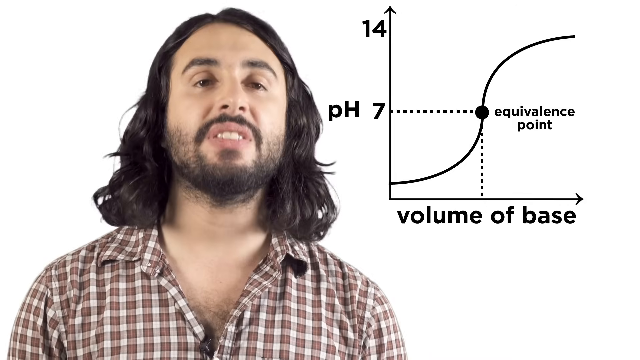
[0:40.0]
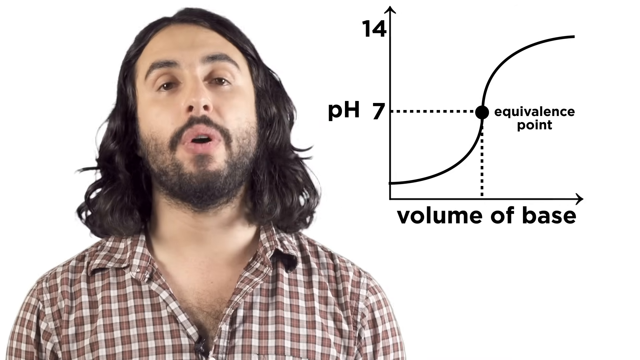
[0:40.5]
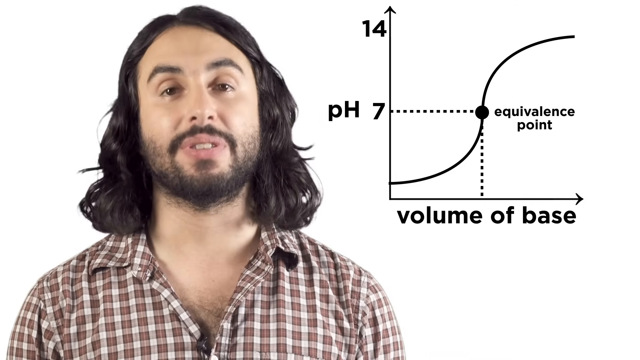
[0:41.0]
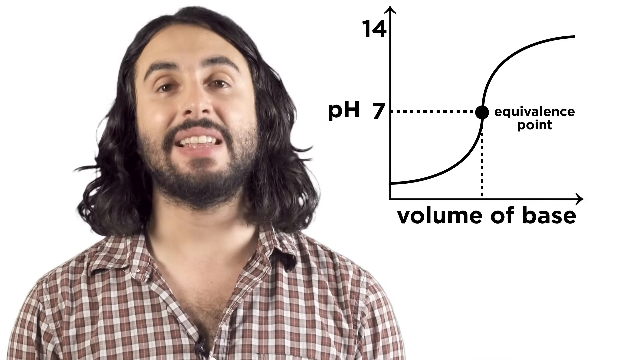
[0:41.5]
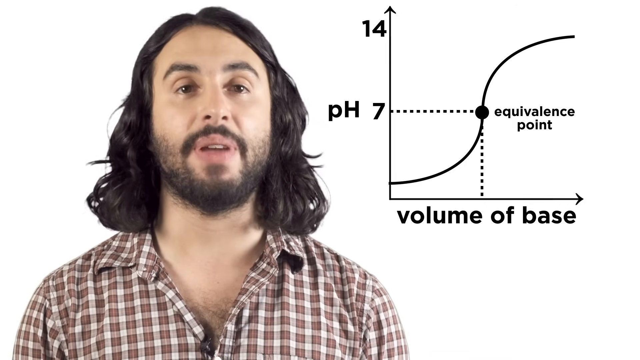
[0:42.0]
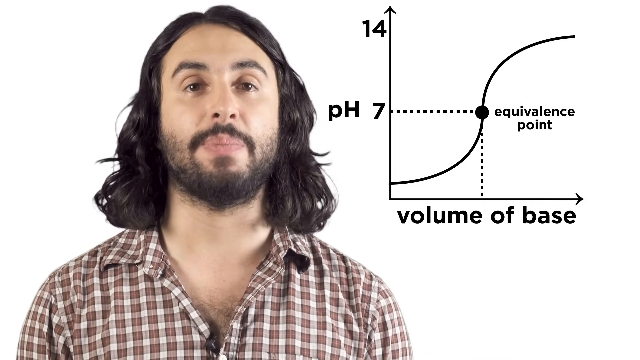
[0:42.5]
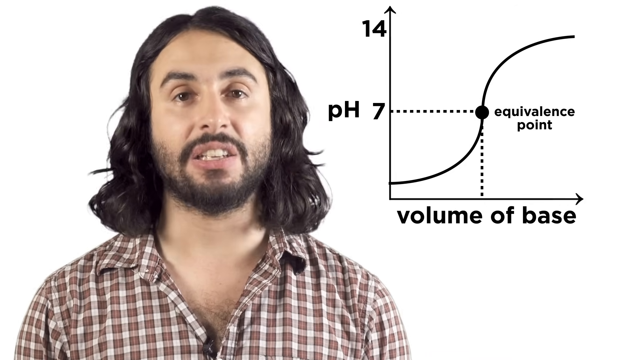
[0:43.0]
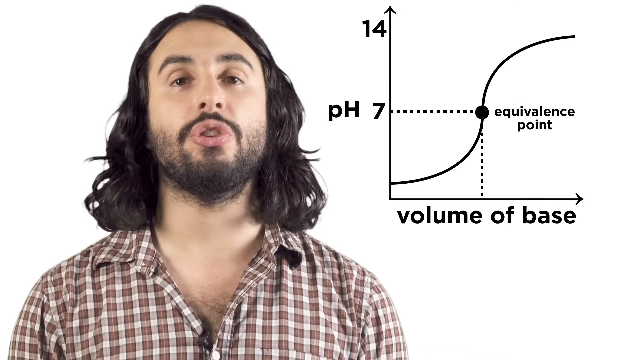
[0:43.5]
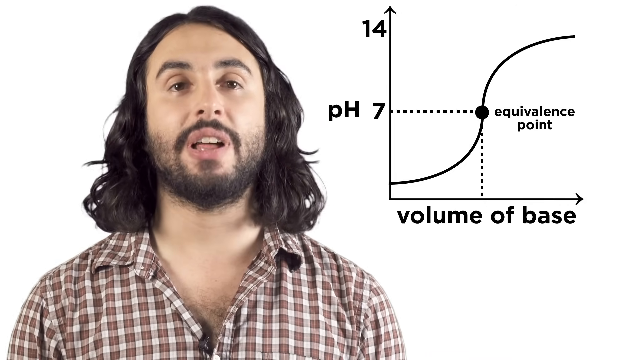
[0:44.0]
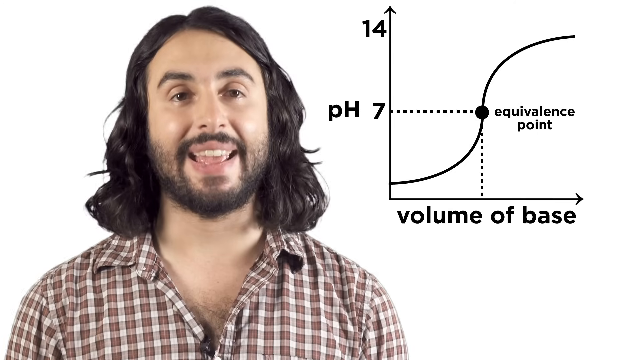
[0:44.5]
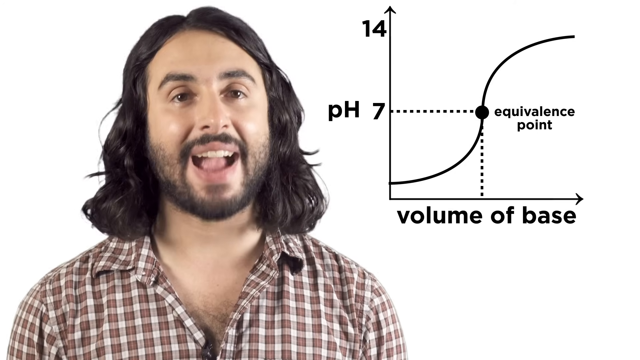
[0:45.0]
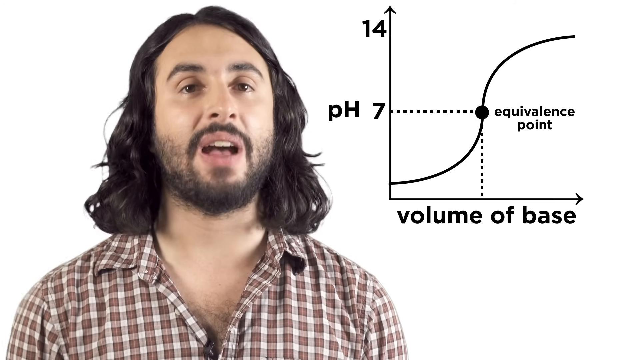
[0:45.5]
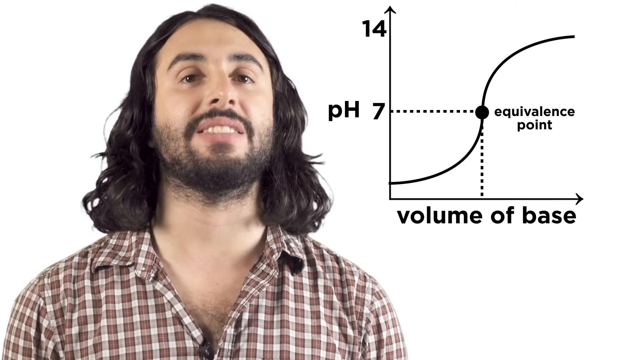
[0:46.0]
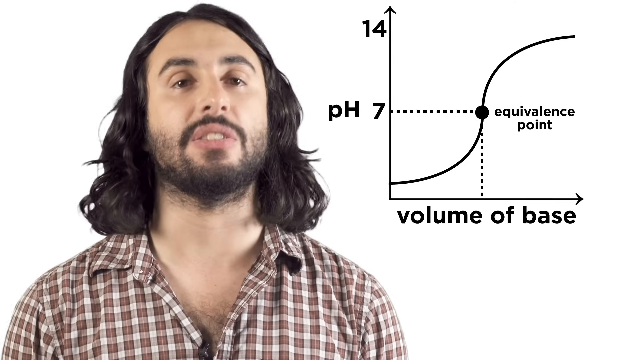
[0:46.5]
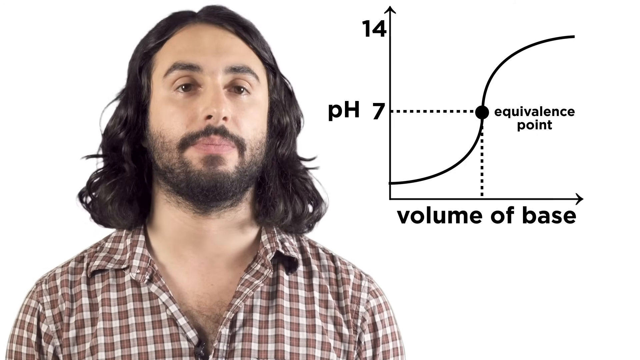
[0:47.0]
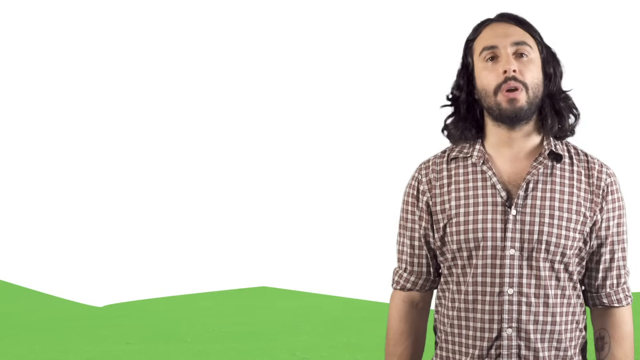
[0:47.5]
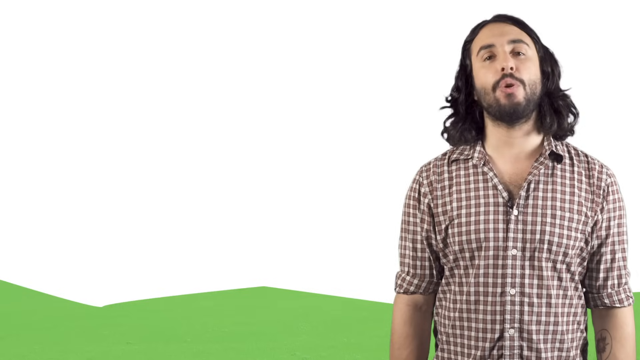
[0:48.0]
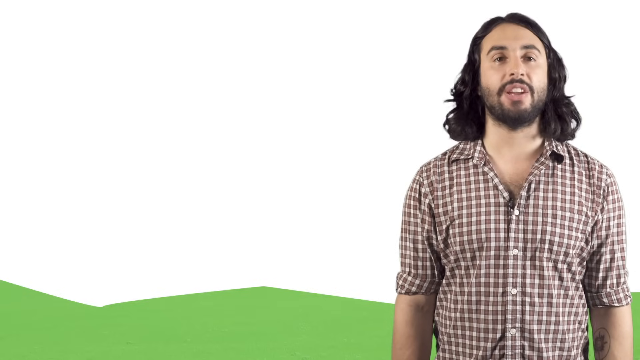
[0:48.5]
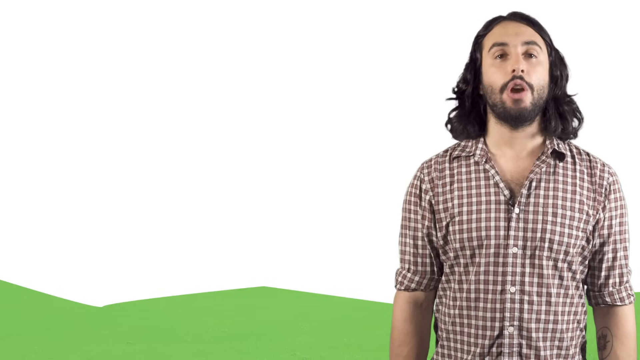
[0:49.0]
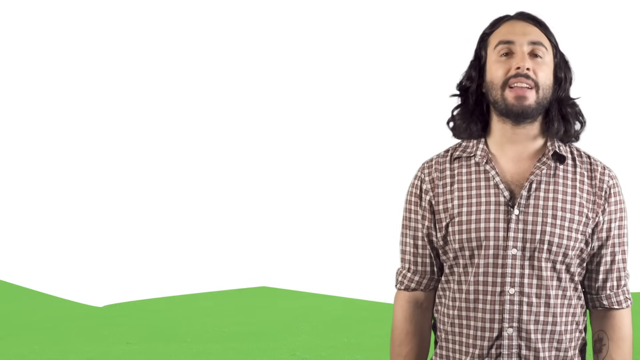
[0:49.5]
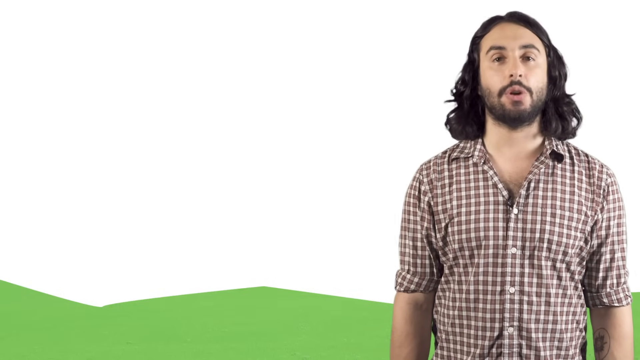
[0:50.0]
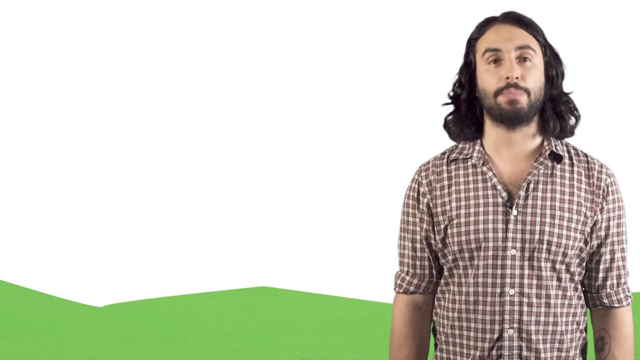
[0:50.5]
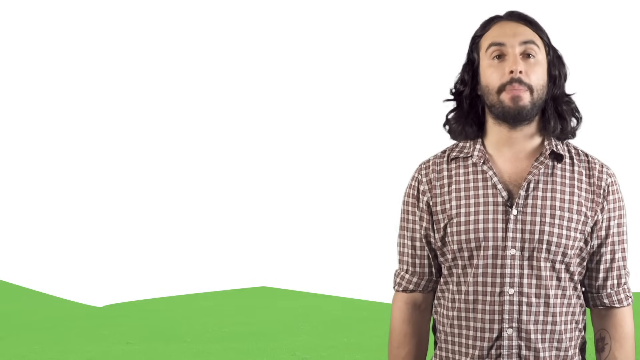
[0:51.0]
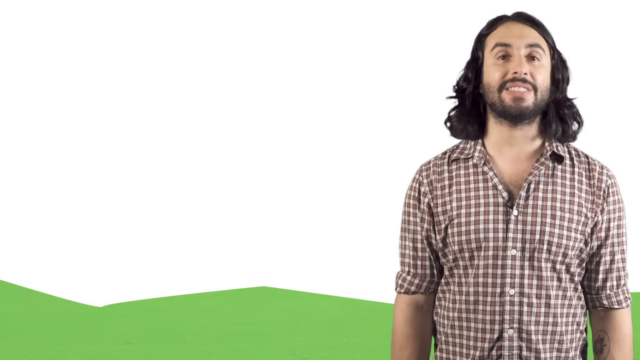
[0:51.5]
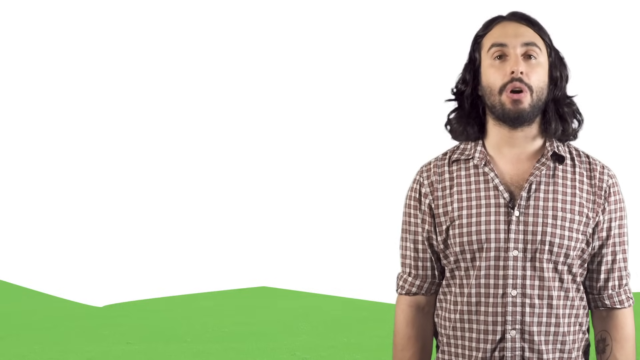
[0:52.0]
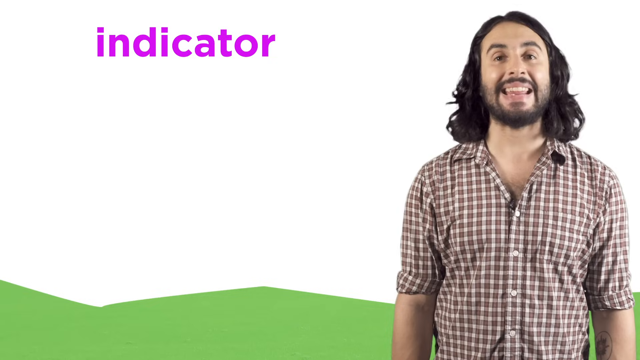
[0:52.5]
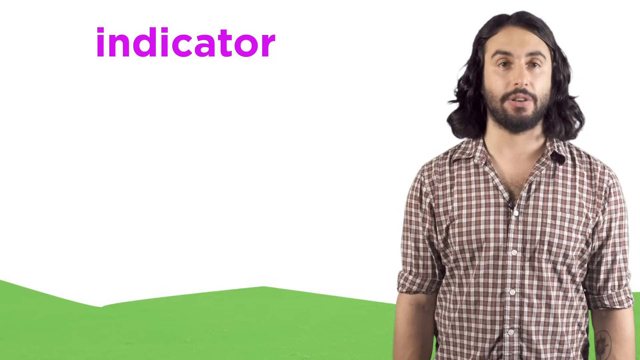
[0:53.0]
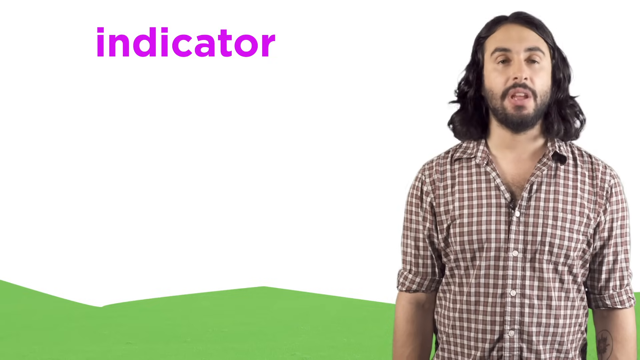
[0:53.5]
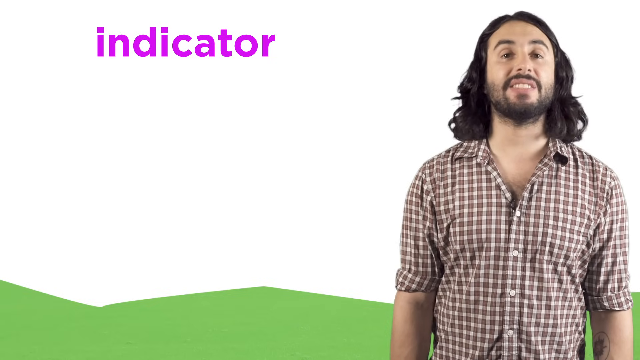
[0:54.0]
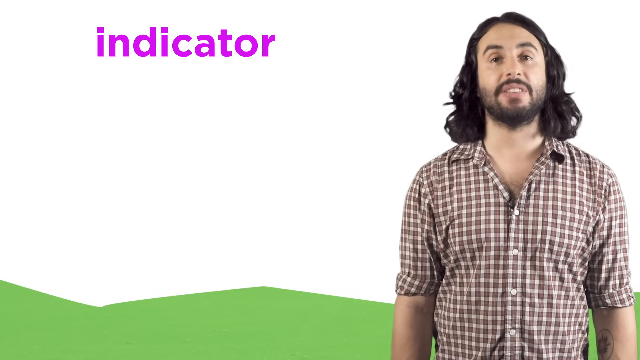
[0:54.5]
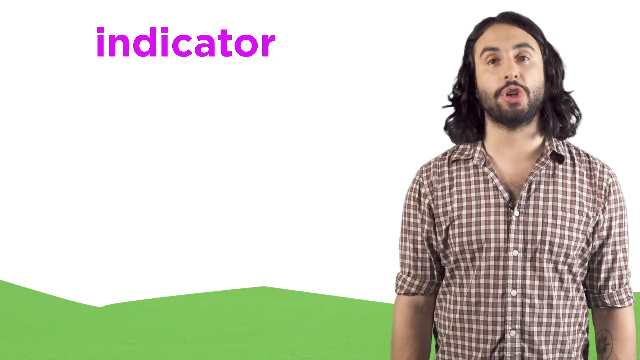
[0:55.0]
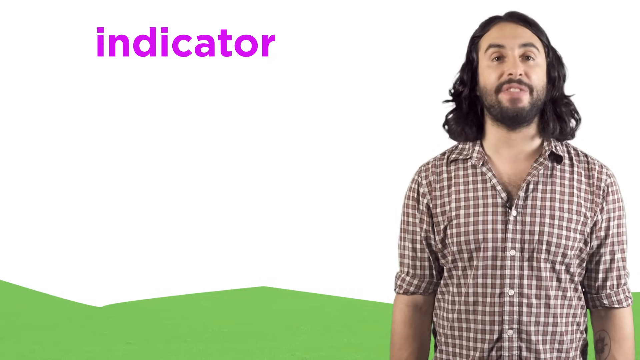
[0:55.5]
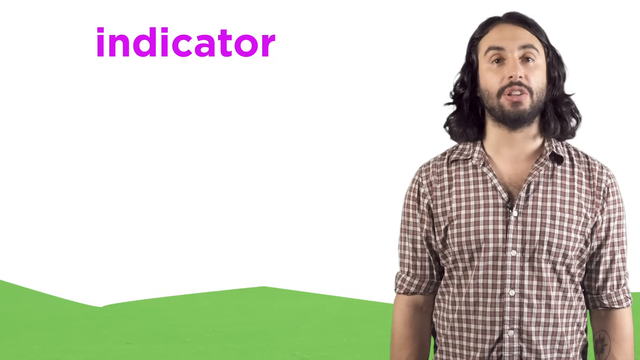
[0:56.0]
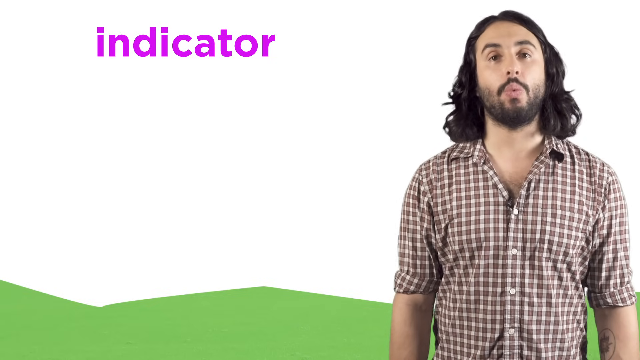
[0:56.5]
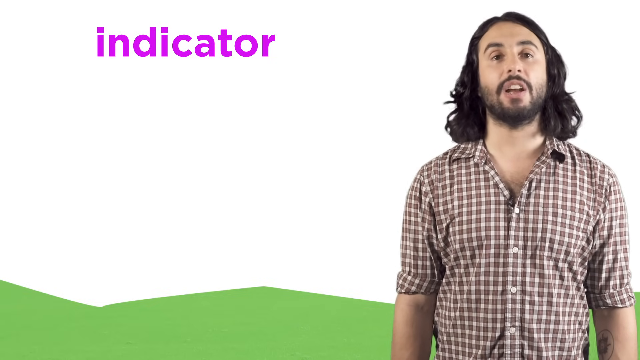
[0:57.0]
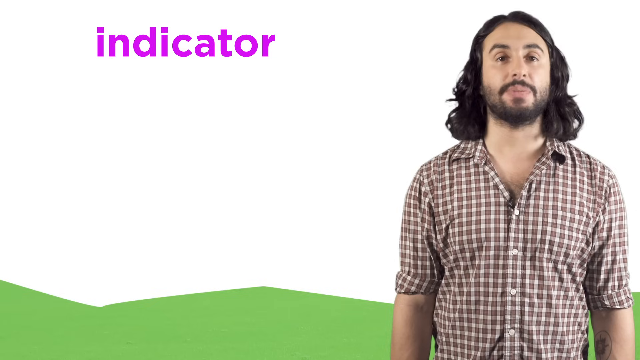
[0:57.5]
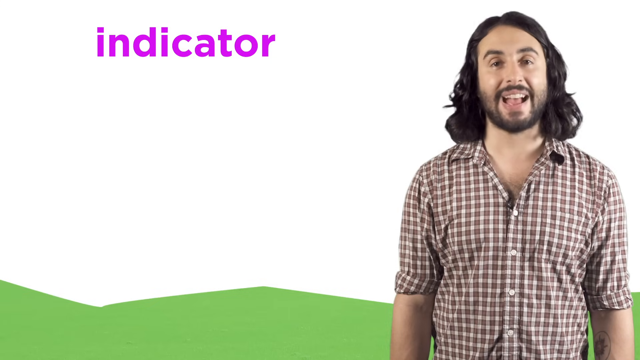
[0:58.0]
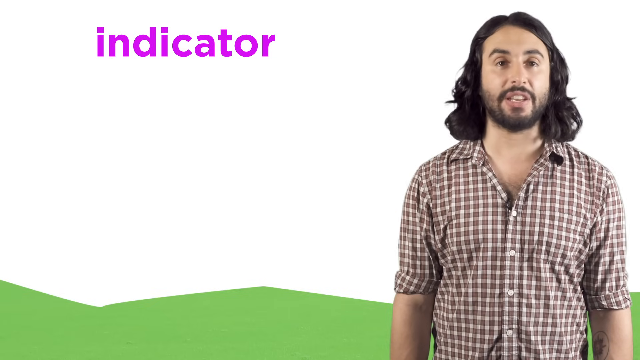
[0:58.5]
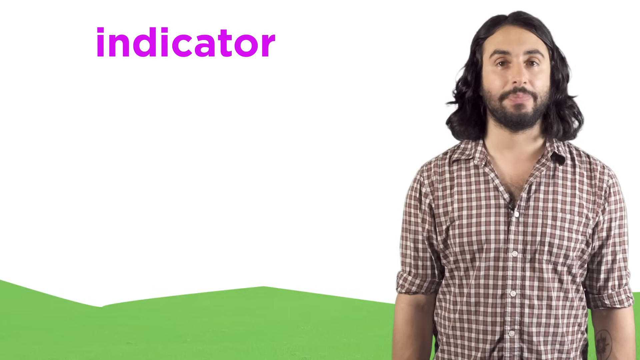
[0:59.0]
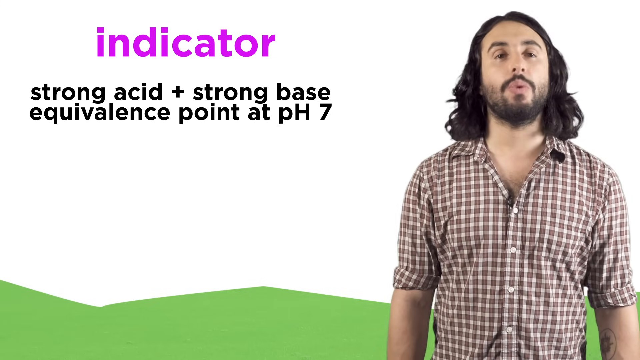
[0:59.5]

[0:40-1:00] A man with long black hair faces the camera and talks, looking at the camera. He wears a checked shirt with one button open, where his mic is placed. On the screen the word "indicator" is written on a white background, and he apparently explains the indicator. The ground where he stands is green, and behind him is white. A graph with horizontal and vertical axes is shown, with pH 7, 14, and the volume of base, marked as the equivalent point. He keeps talking. The camera is close and stays still, and he does not move.